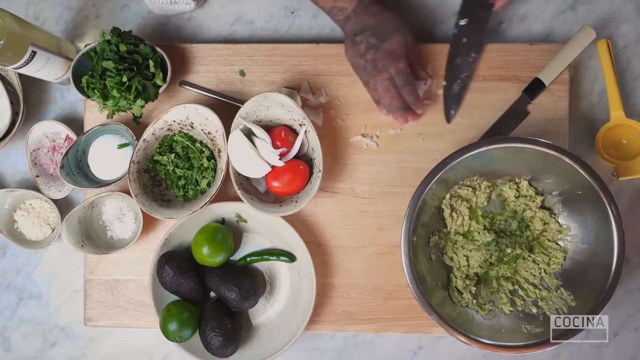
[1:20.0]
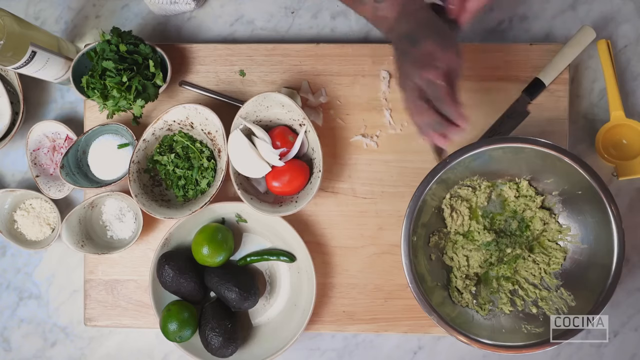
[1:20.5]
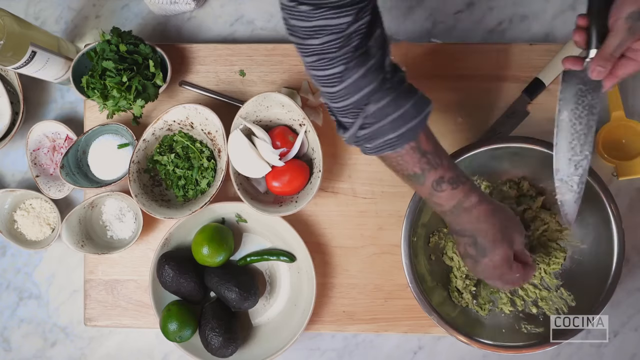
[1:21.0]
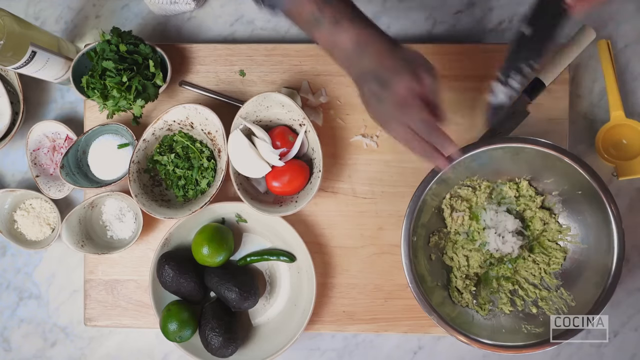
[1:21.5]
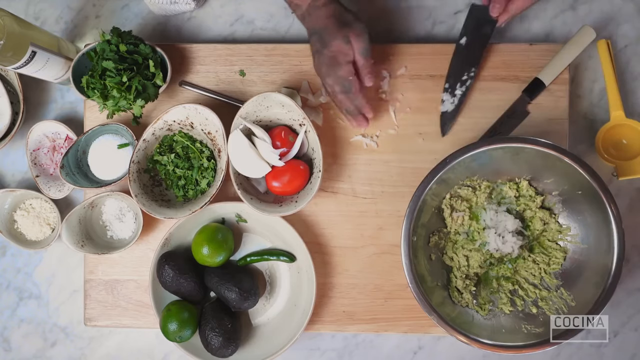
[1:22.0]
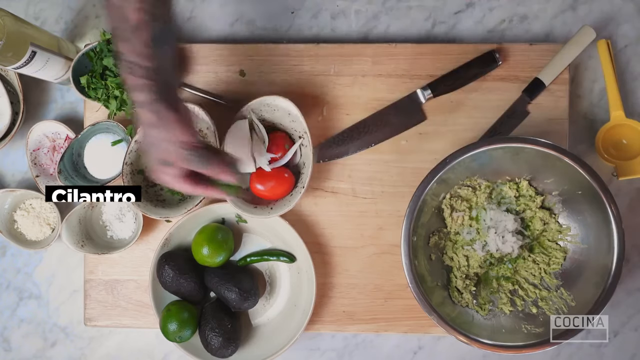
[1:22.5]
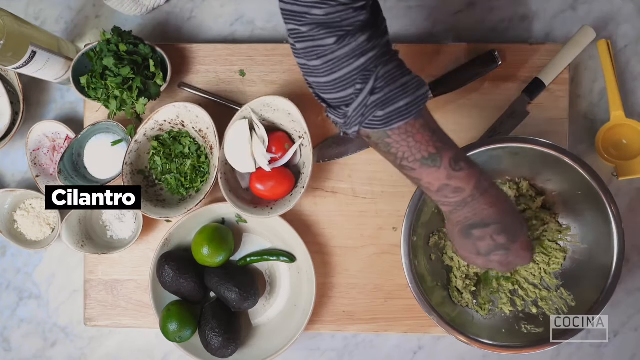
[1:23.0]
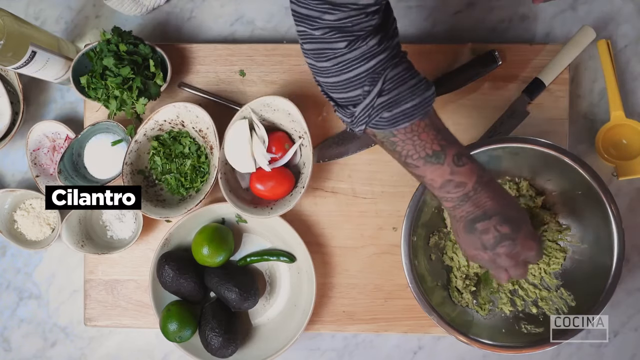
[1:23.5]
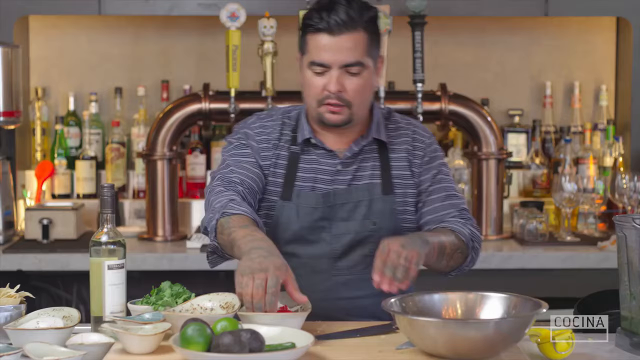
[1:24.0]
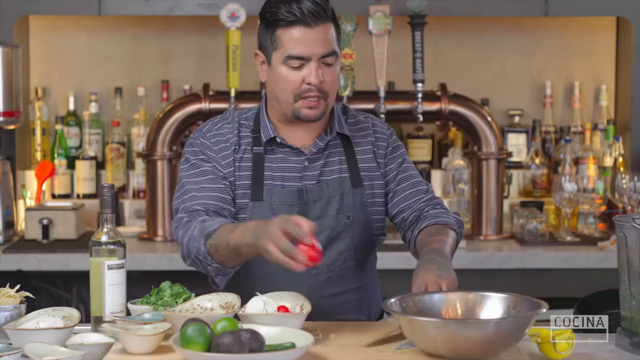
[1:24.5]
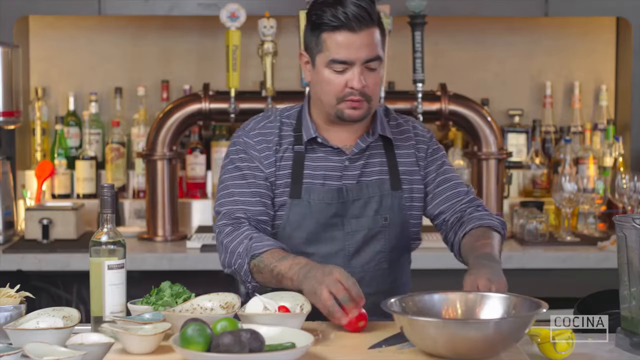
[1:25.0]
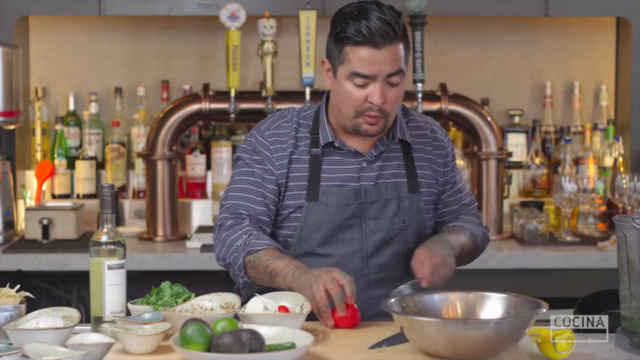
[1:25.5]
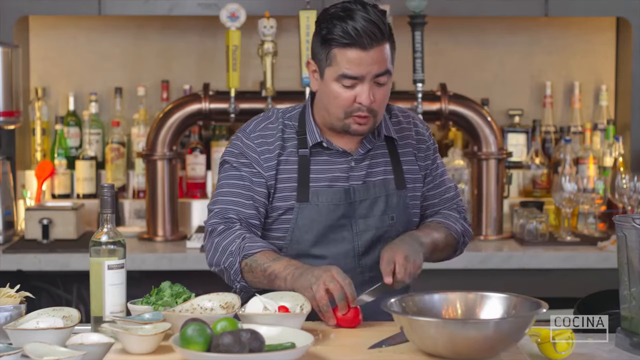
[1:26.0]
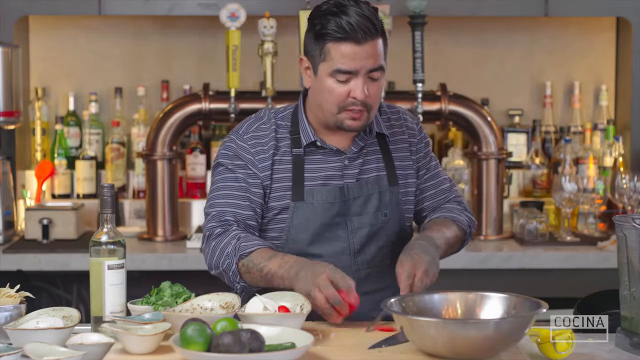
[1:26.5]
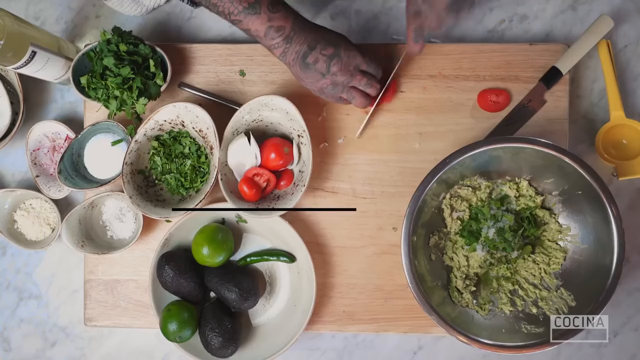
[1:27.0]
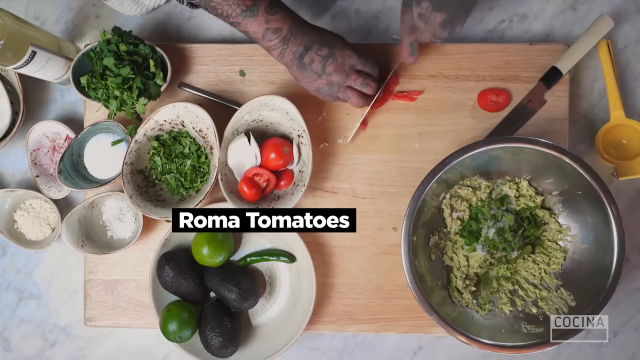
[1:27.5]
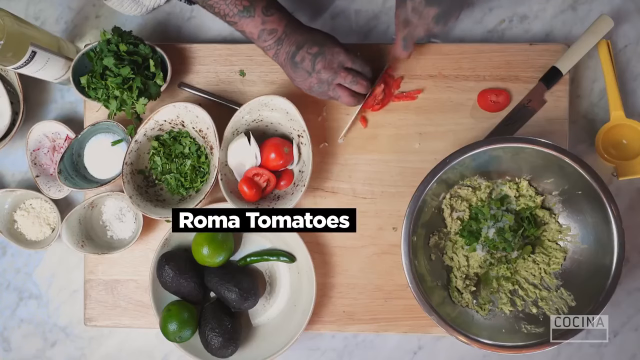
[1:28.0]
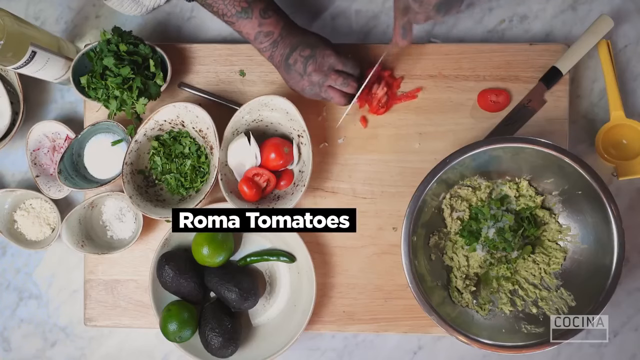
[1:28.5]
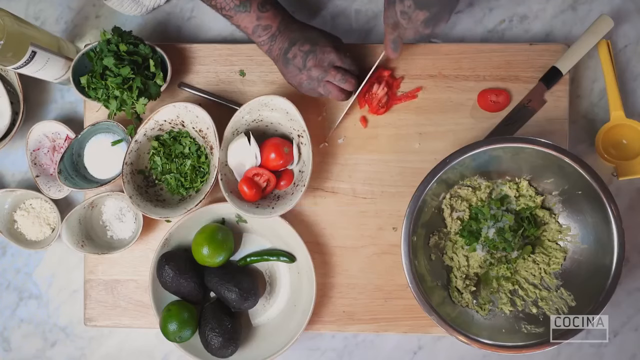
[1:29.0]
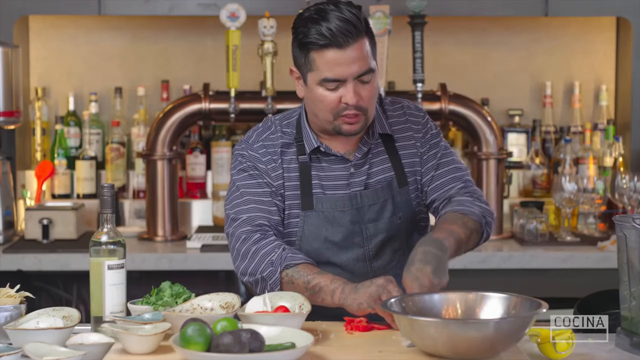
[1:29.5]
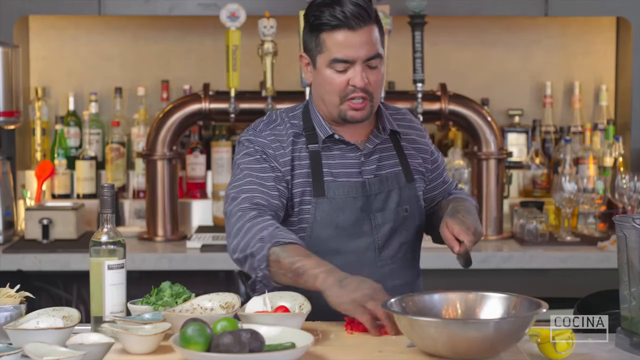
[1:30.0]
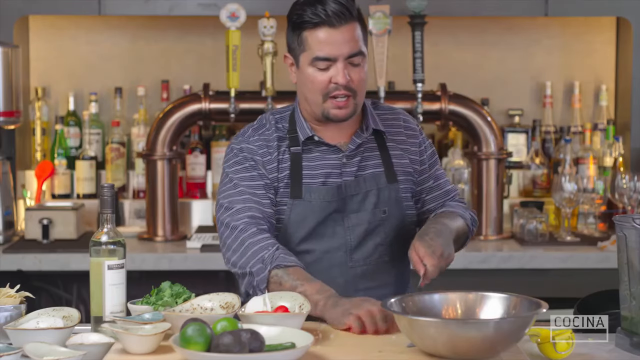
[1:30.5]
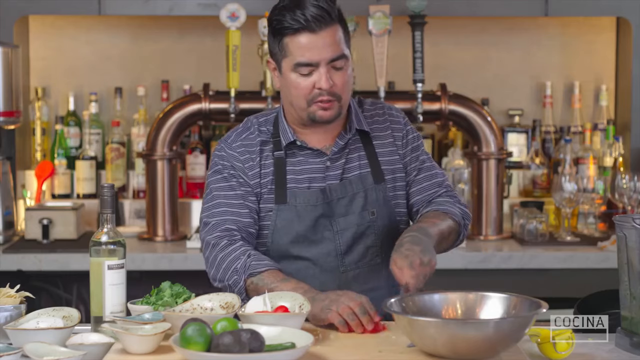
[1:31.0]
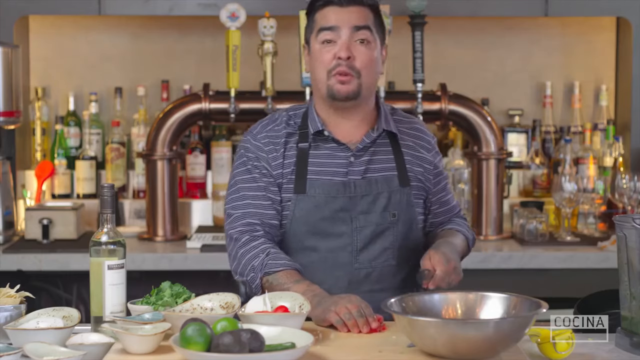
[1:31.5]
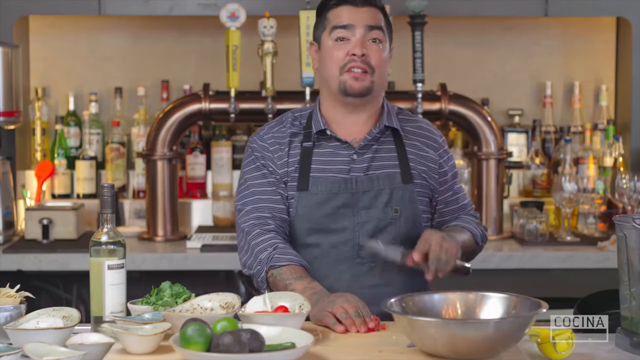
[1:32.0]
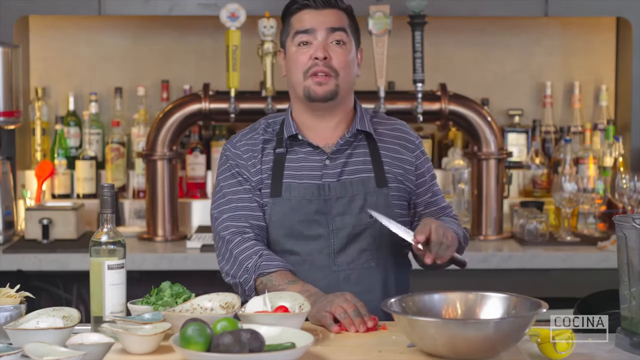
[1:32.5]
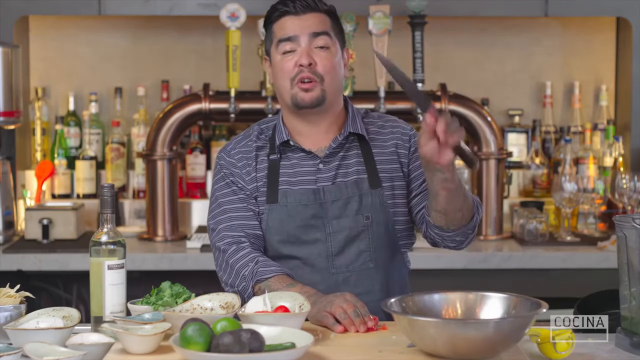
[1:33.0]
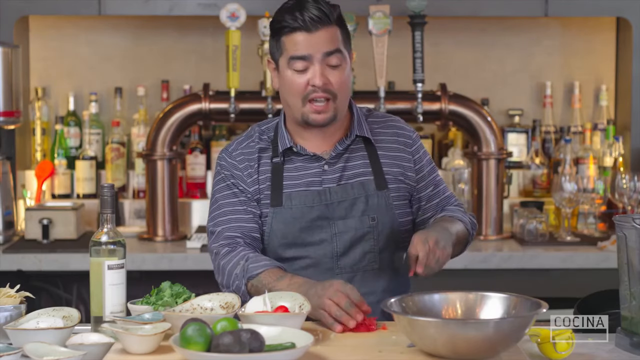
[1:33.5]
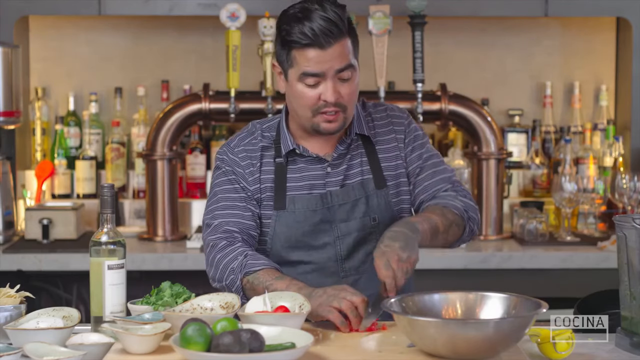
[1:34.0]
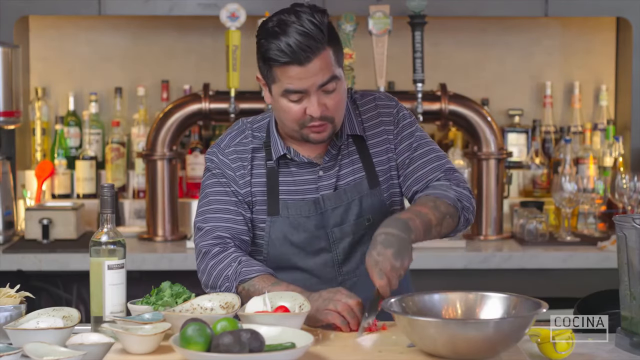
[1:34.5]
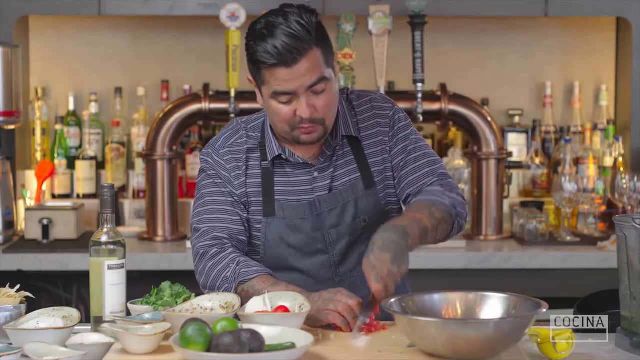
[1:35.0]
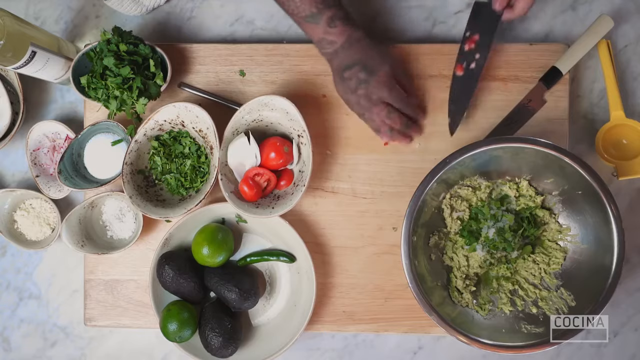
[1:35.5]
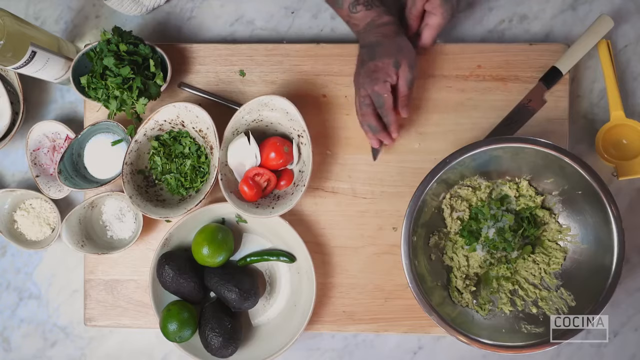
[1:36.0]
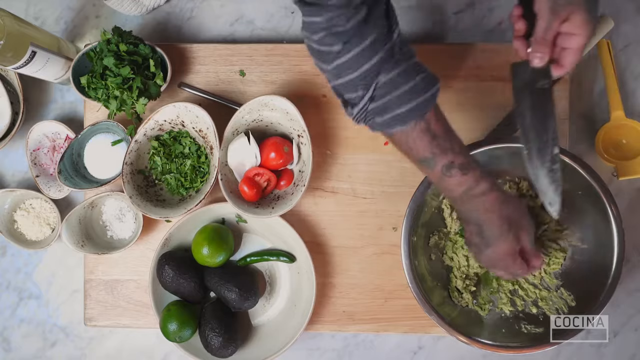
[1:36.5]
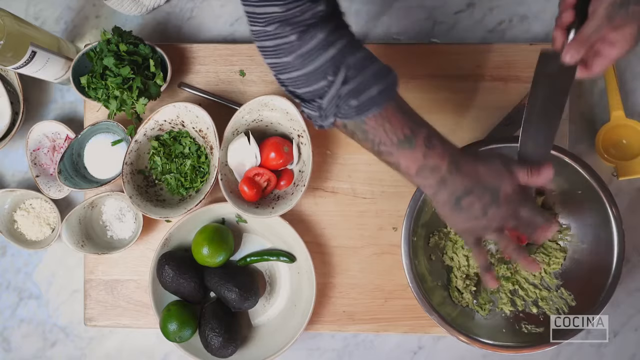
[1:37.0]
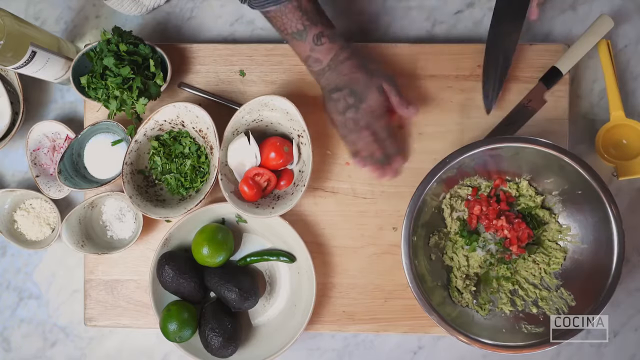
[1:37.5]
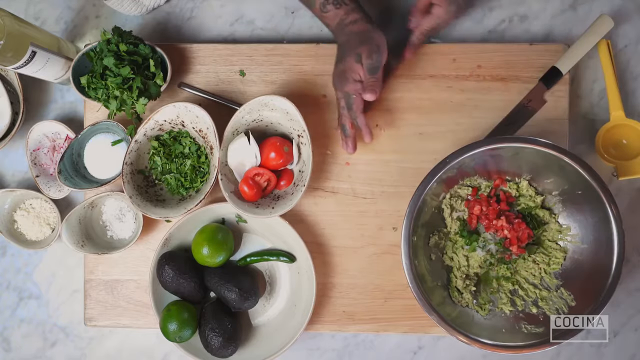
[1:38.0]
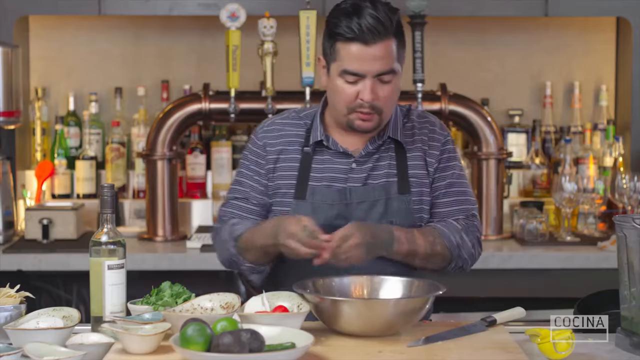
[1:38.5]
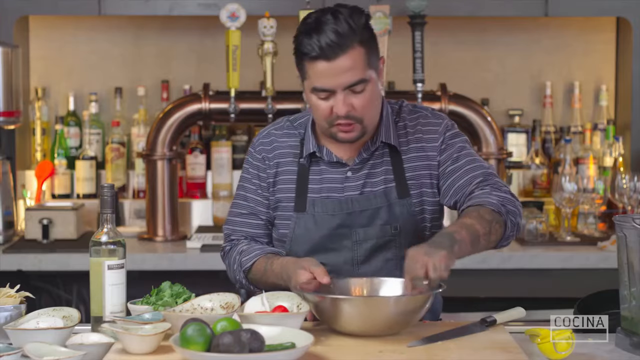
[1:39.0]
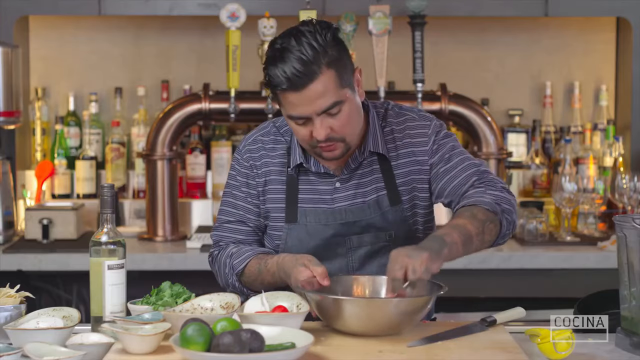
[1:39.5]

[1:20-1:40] A top-down view shows what looks like a cutting board. At the bottom right is a large silver bowl with what looks like mashed avocado inside. On the left side are many ingredients: what looks like white powder, cilantro, tomatoes, onions, avocados, limes, and green chilies at the bottom. What look like diced white onions are put into the silver bowl, followed by what looks like cilantro, and white text pops up reading "cilantro". The view zooms out to a man who looks Mexican and in his 30s, facing the camera, with a mustache and a beard, wearing an apron and a blue and white striped shirt with his sleeves rolled up. Talking, he cuts what looks like a tomato, and white text reads "Roma tomatoes" as the view goes top-down. Holding the knife in his left hand, he talks and gestures. He puts the diced Roma tomatoes into the silver bowl, then takes a silver spoon in his left hand and mixes the ingredients in the bowl.